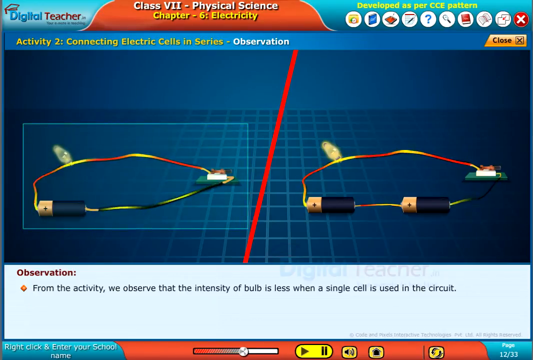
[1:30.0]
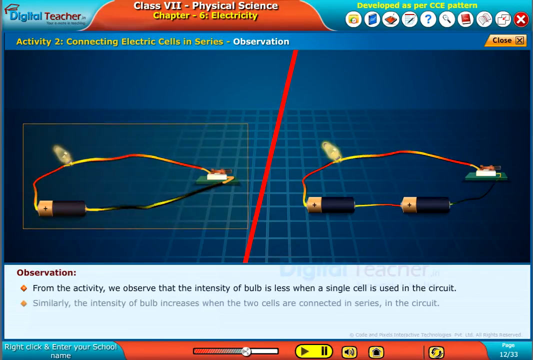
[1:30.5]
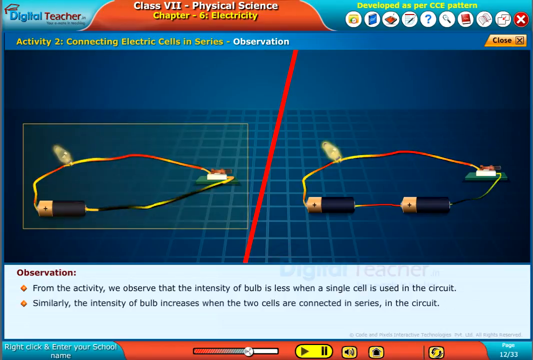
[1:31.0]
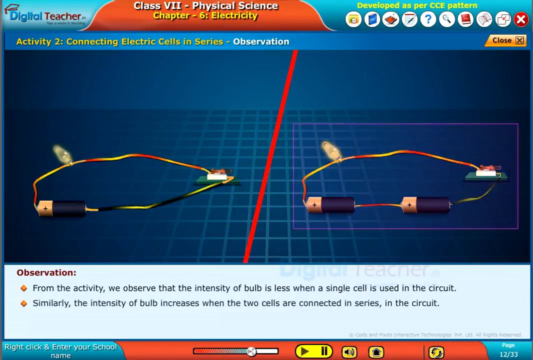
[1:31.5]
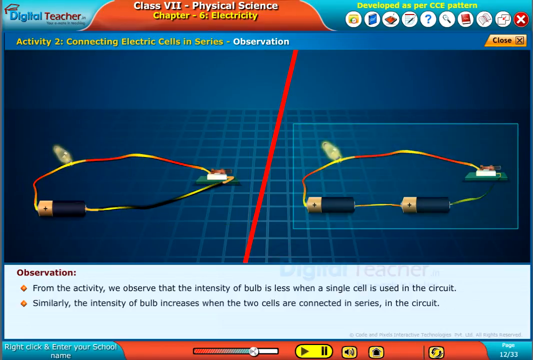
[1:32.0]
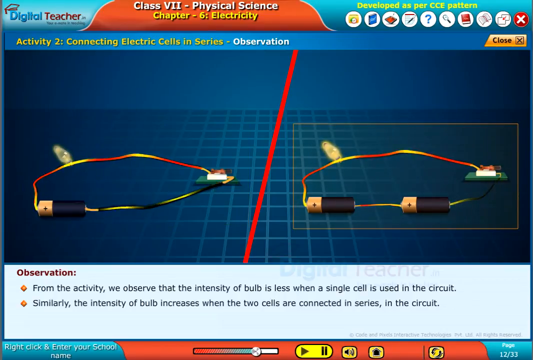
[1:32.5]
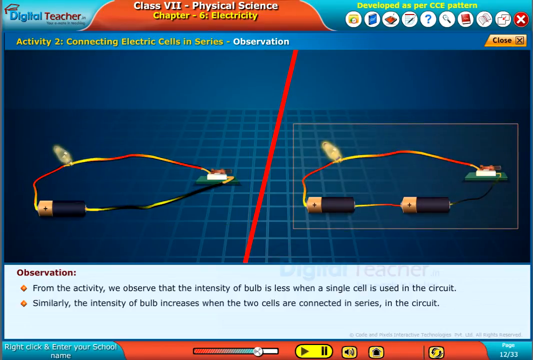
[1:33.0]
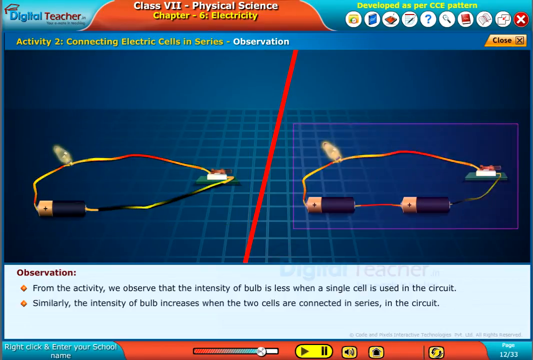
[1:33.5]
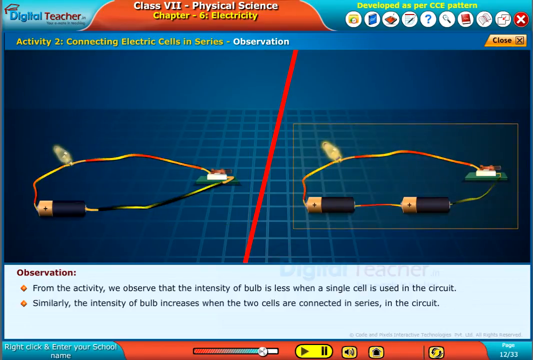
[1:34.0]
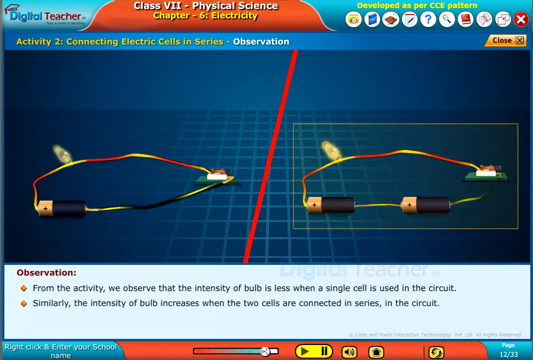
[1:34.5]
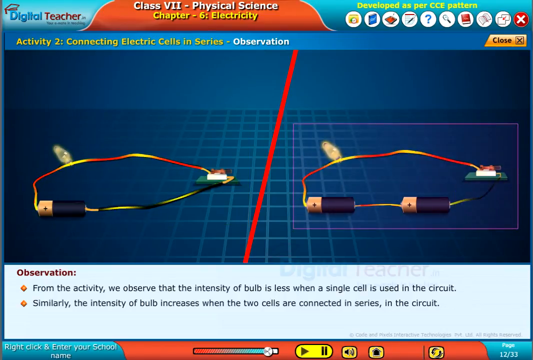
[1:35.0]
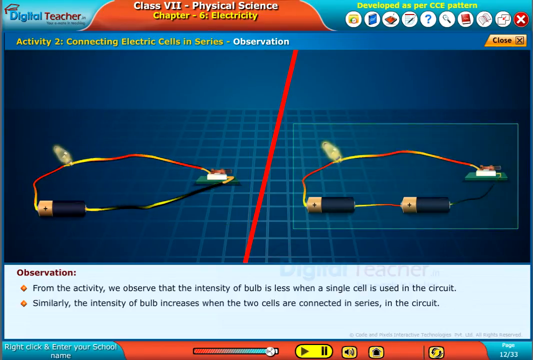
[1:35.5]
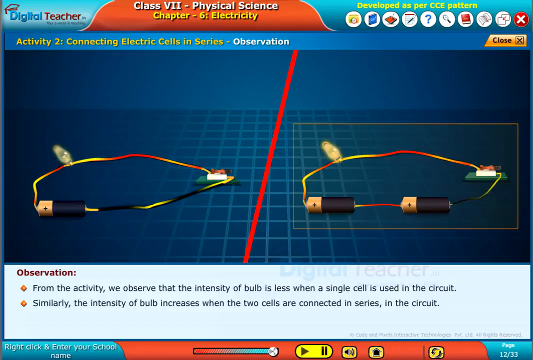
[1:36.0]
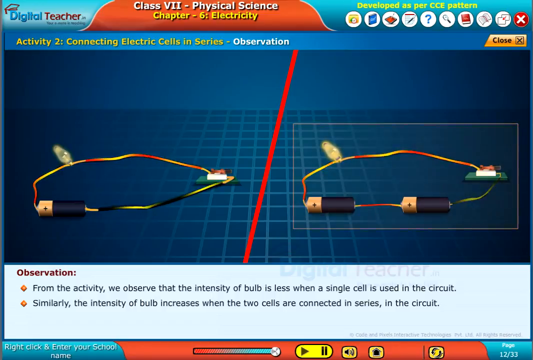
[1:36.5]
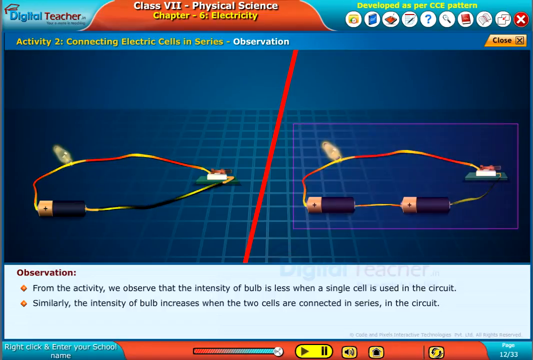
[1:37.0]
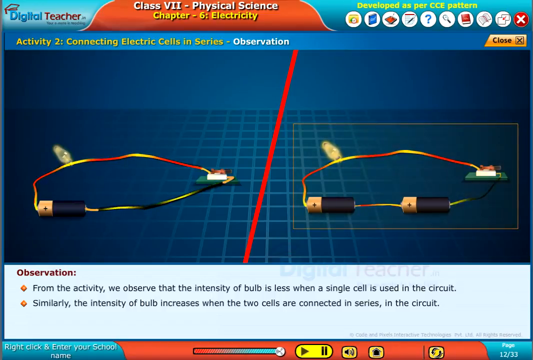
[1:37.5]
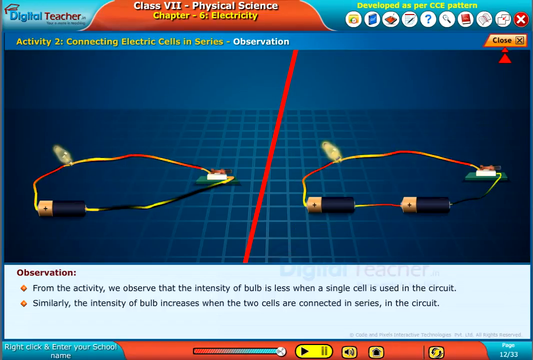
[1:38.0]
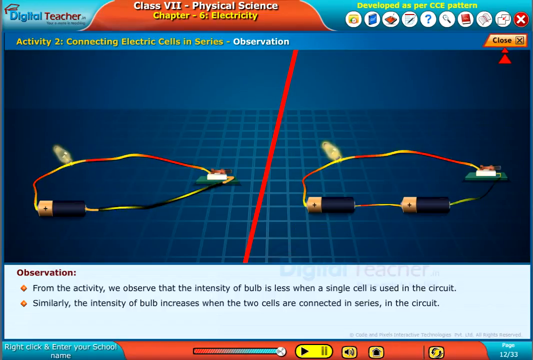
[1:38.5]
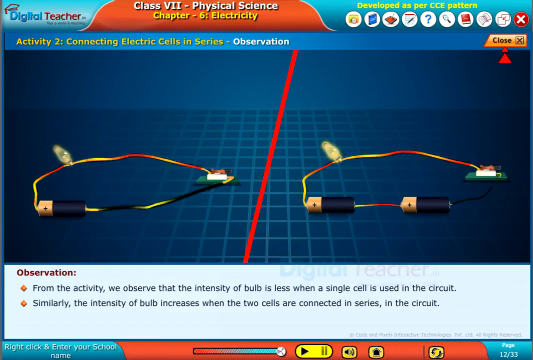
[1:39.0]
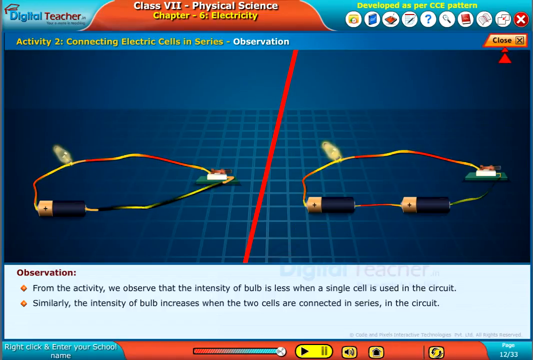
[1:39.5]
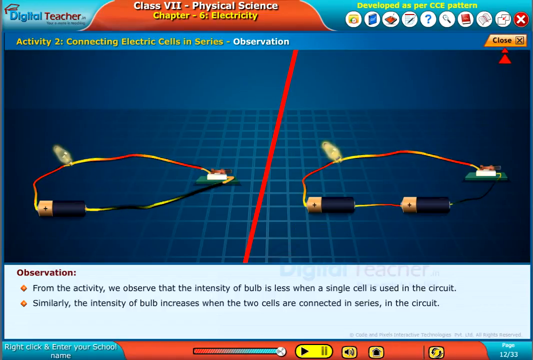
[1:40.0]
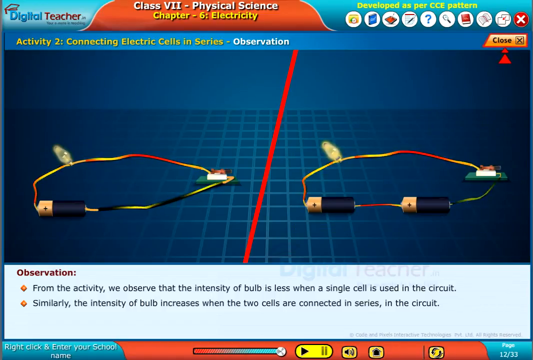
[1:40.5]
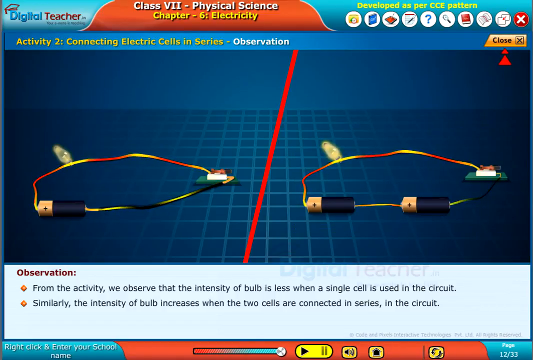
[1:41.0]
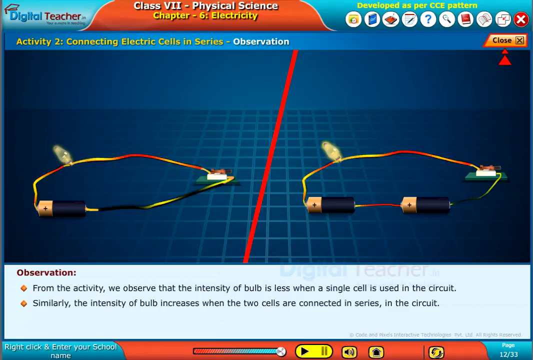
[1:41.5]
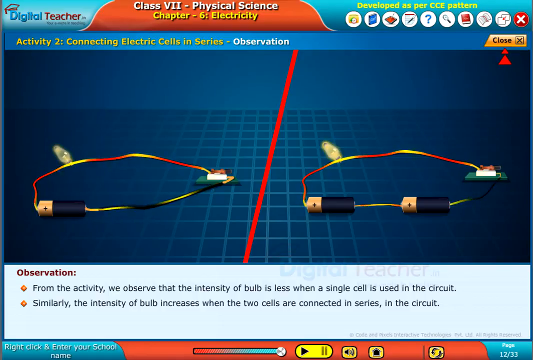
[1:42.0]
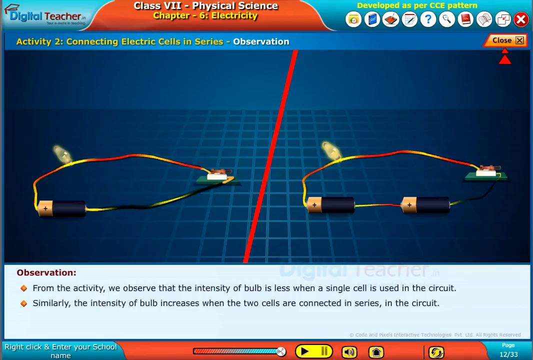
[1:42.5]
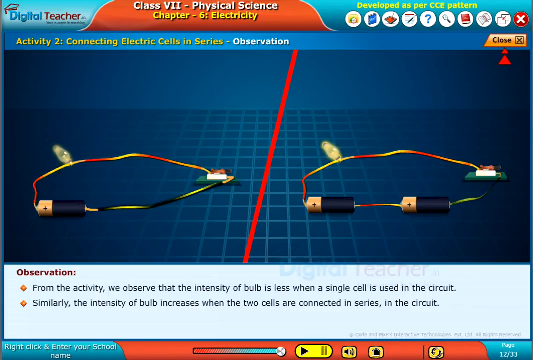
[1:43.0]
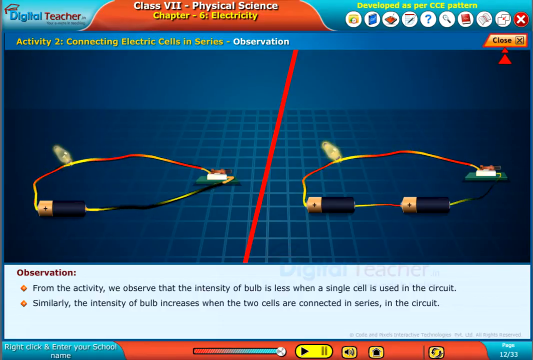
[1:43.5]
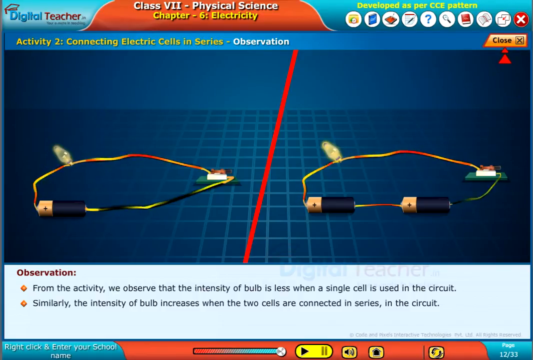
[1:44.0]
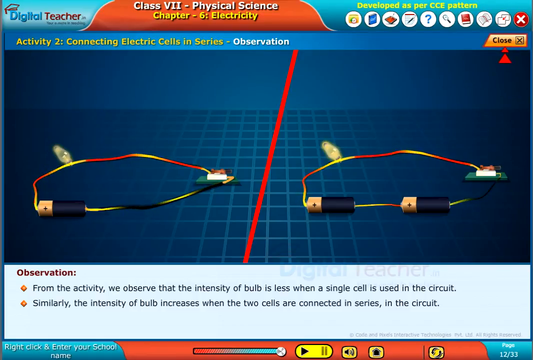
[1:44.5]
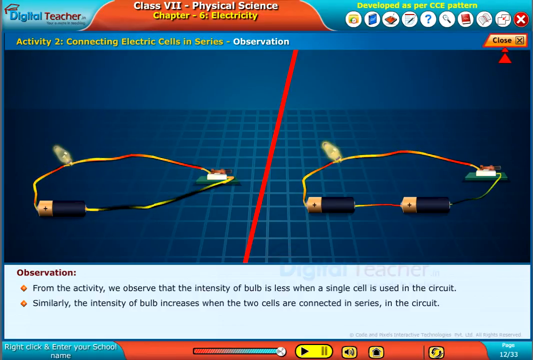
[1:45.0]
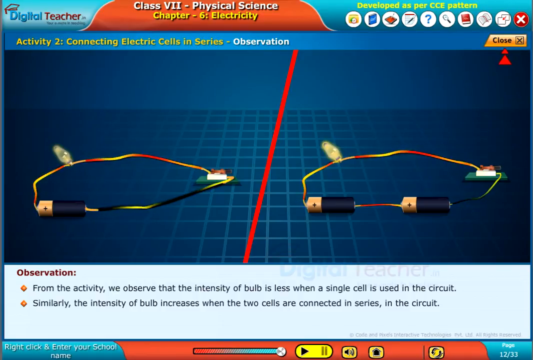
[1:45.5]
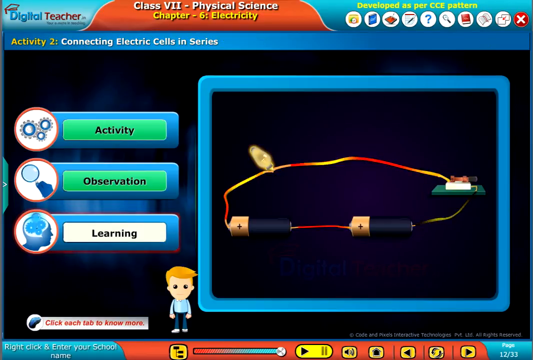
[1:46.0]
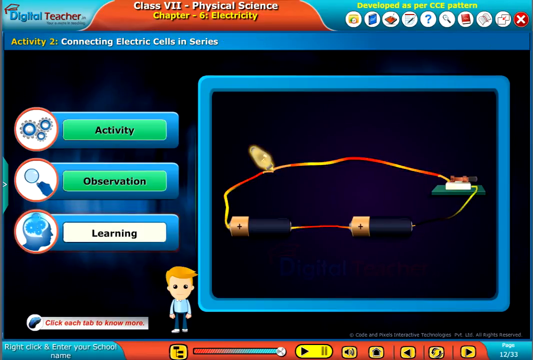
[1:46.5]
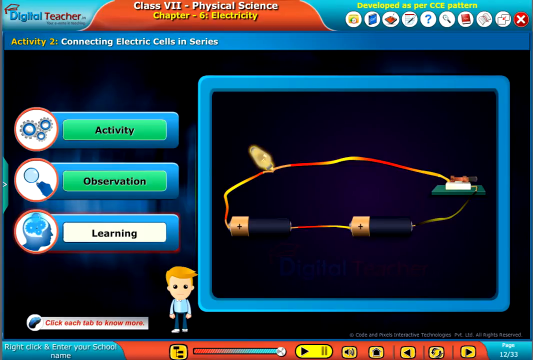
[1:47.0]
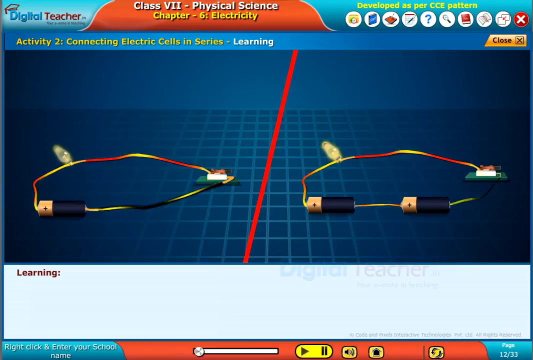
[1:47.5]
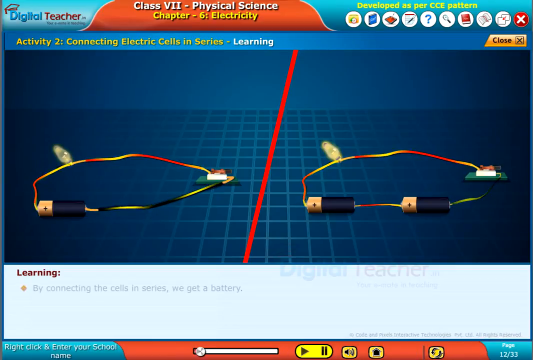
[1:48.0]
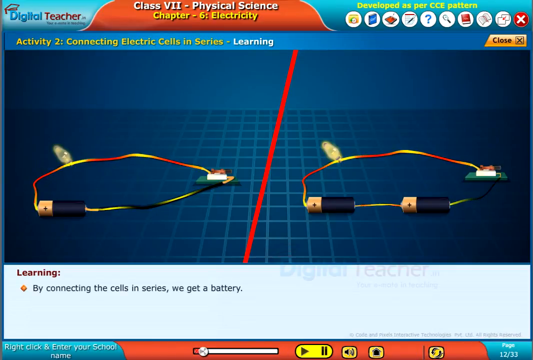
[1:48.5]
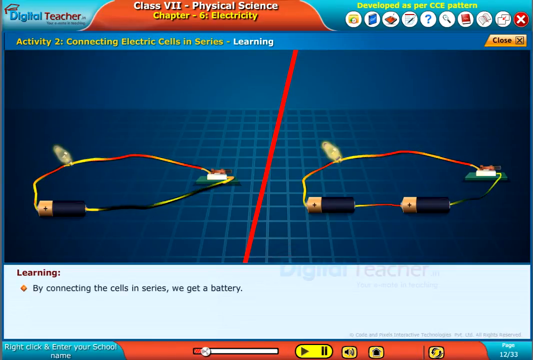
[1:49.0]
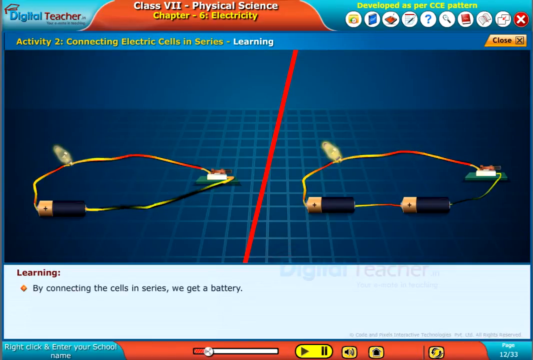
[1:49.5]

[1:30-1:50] The two animated diagrams remain with little movement, the cells still separated by a horizontal red line. A new bullet appears beneath the last one: "similarly, the intensity of the bulb increases when the two cells are connected in series in the circuit", and the second diagram, with two batteries, is highlighted. Meanwhile a red pawn-looking thing hovers above. The video switches for a brief second to another screen showing a little guy and the three tabs, then cuts back to the screen, hovering over the first diagram with just one cell. The batteries look like Duracell-type batteries, with a copper top about a quarter of the battery's length bearing a plus sign and the rest black for the minus sign, on both the one-cell and two-cell diagrams.